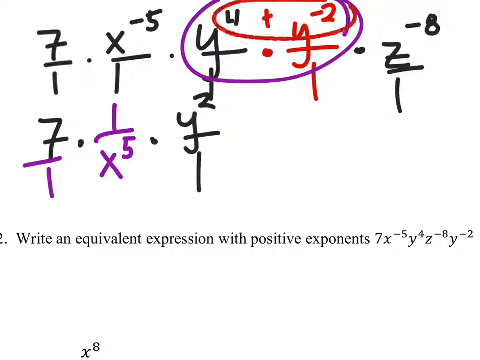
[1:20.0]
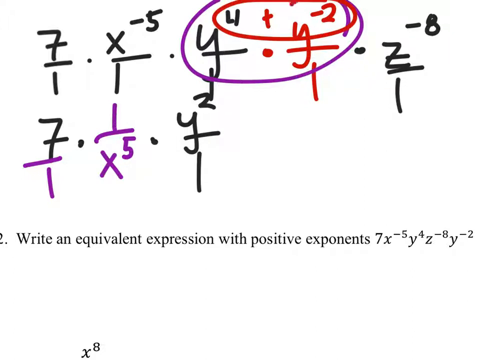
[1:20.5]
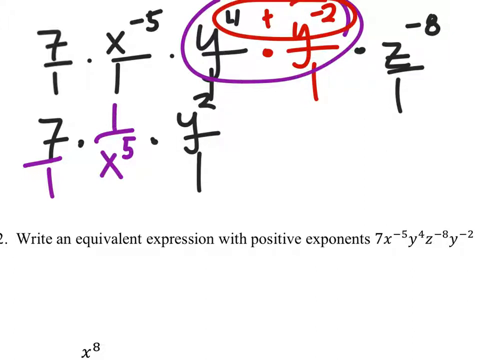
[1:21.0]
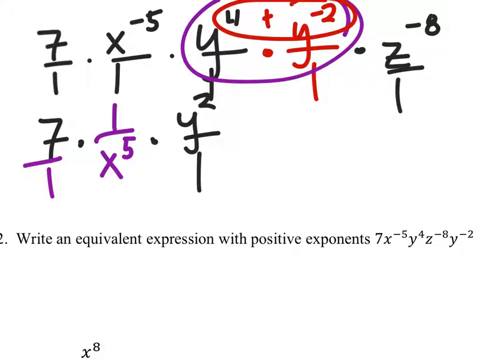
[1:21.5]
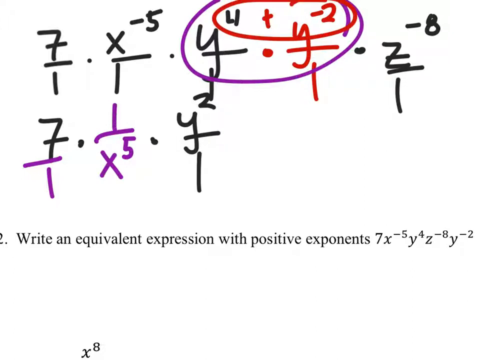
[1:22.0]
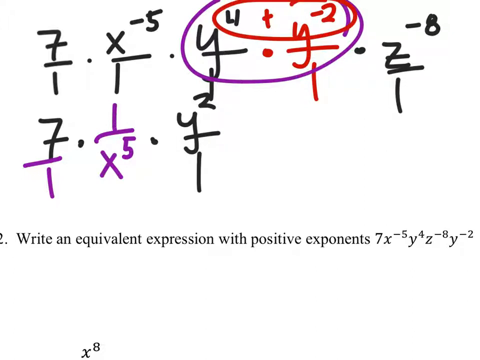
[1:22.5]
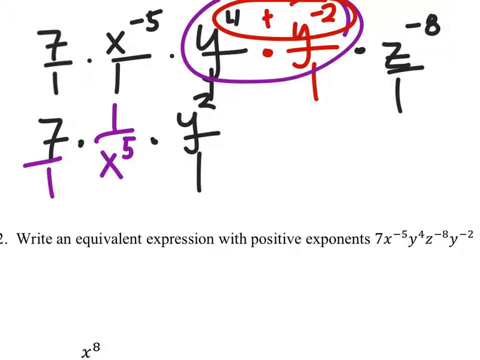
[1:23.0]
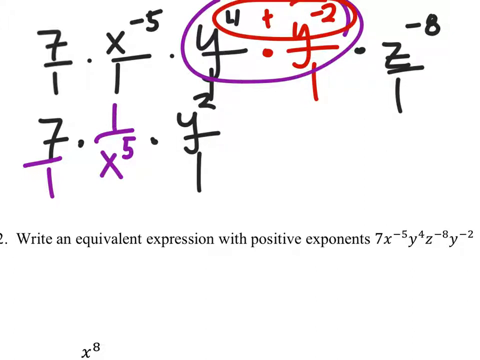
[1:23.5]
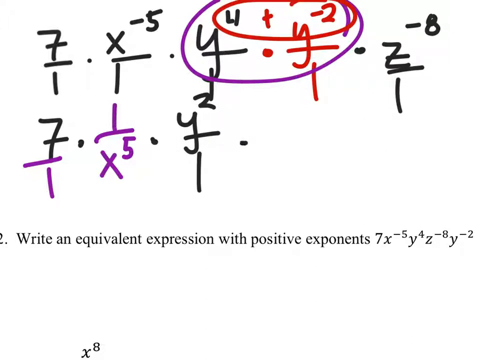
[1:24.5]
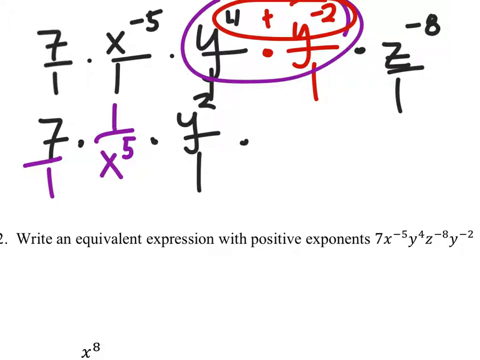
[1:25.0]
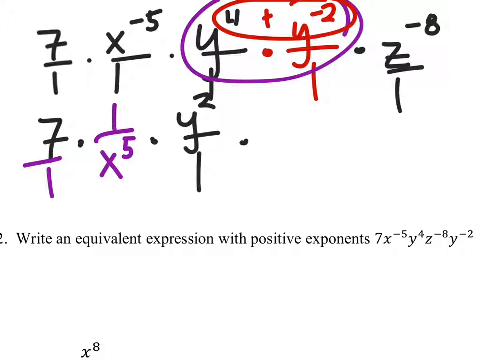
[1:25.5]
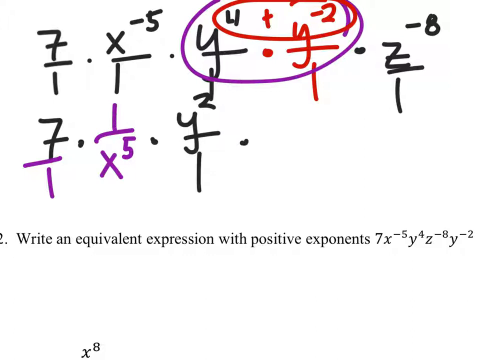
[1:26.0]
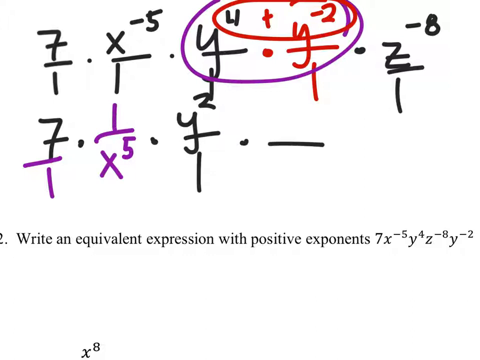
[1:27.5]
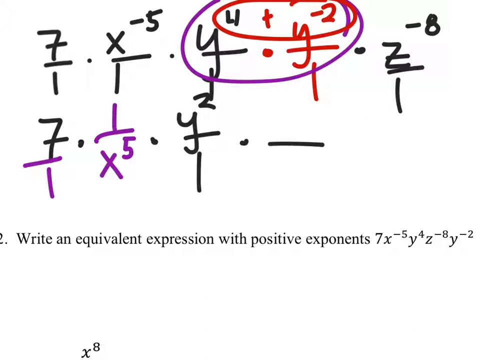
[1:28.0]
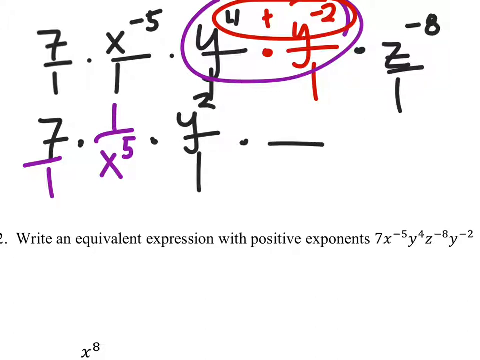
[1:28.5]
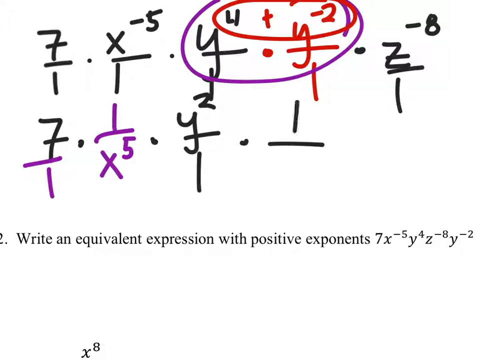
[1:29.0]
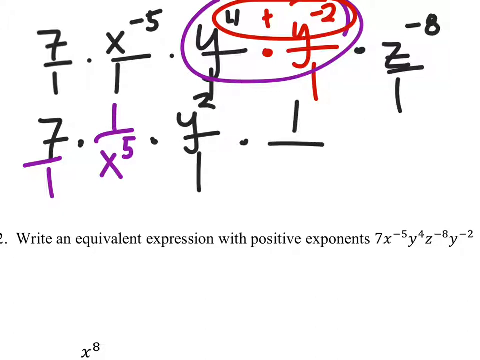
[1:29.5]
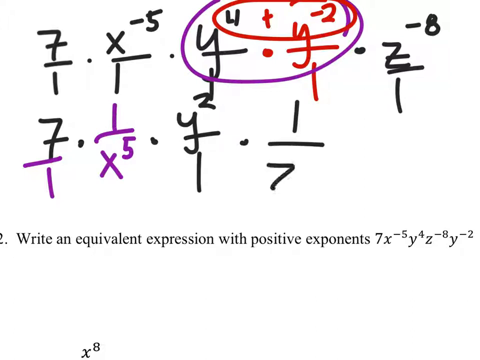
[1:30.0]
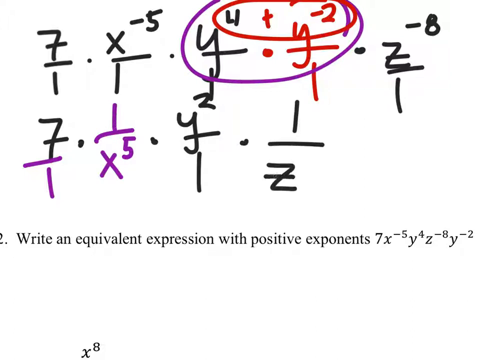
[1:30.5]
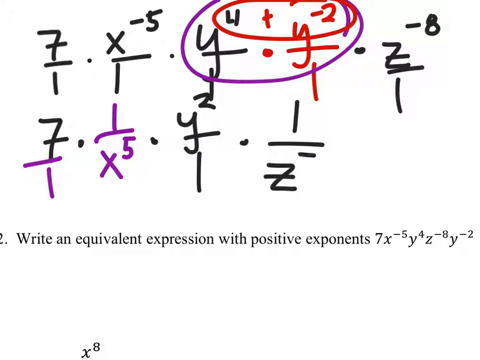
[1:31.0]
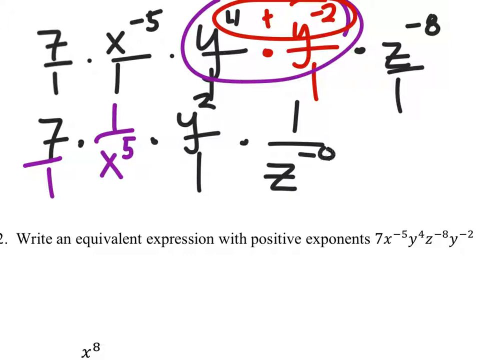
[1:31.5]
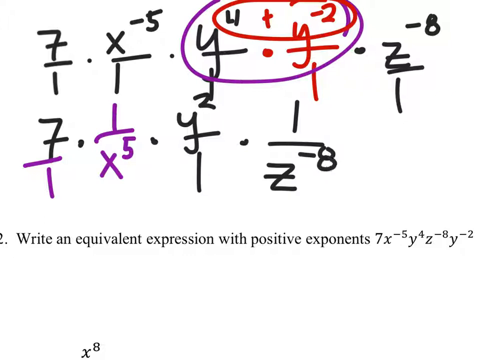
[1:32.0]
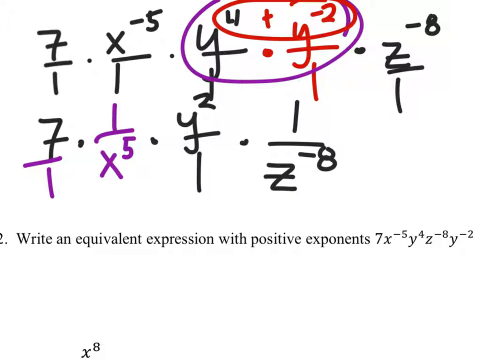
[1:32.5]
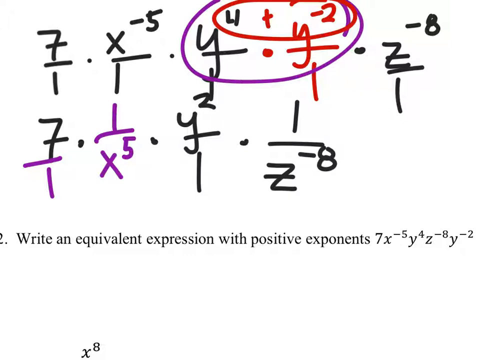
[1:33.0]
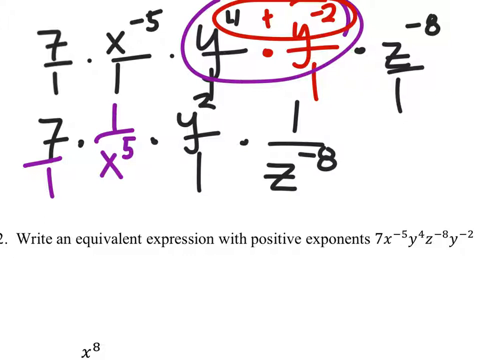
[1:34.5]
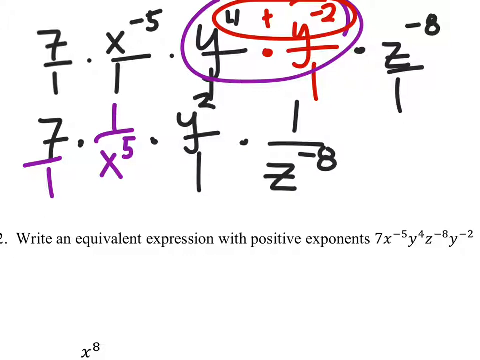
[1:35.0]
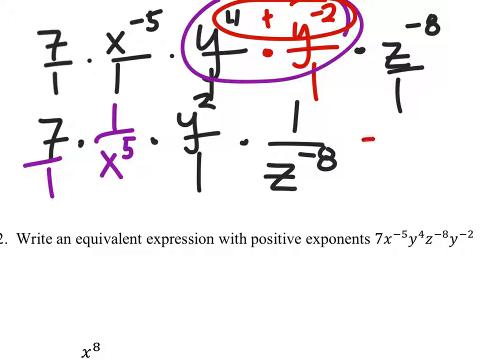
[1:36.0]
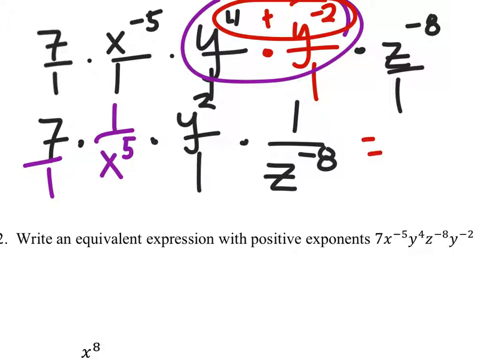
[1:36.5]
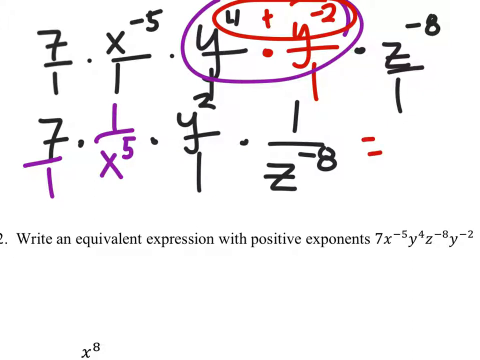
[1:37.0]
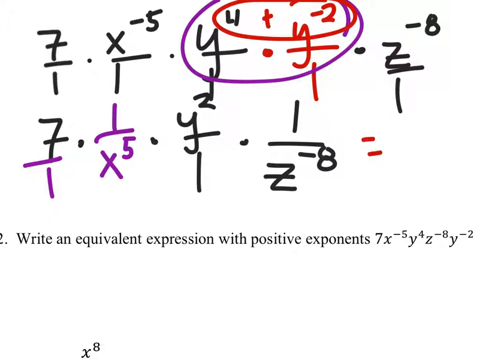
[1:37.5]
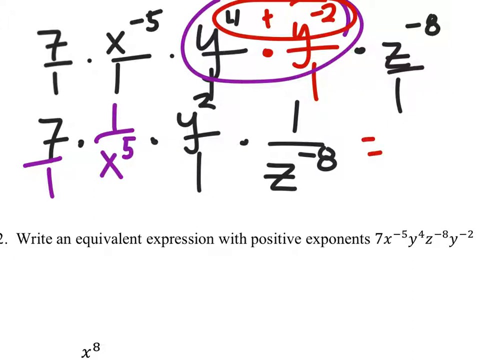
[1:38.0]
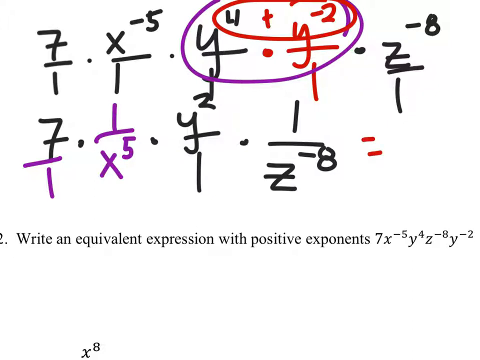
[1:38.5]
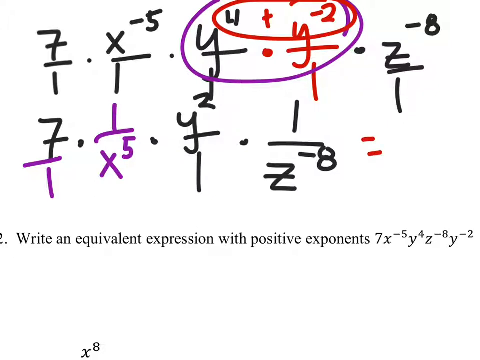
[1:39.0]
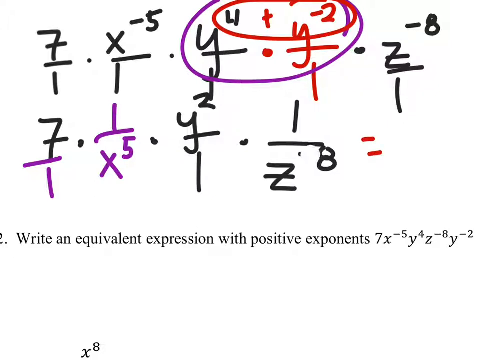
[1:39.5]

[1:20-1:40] The white screen with the gradient to black in the bottom 20 percent remains. Handwritten across the top, in black, is 7 over 1 times x to the negative 5th over 1 times y to the 4th over 1, then in red, times y to the negative 2 over 1, and in black, times z to the negative 8 over 1. A purple circle surrounds the y's and their exponents. A red circle surrounds just the exponents, clipping into the top of the red y, with a plus indicating the positive 4 and negative 2 are added together. Beneath that is the beginning of the rewritten equation: a black 7 with a purple "over 1," then in purple, times 1 over x to the 5th, then in black, times y squared over 1. Typed beneath that is the 2, partially clipped off the page, with "write an equivalent expression with positive exponents" and 7x to the negative 5th, y to the 4th, z to the negative 8th, and y to the negative 2. The screen holds for a couple of seconds, then a black times is added after y squared, followed by a dividing line, 1 over z to the negative 8, and a red equals sign at the end.